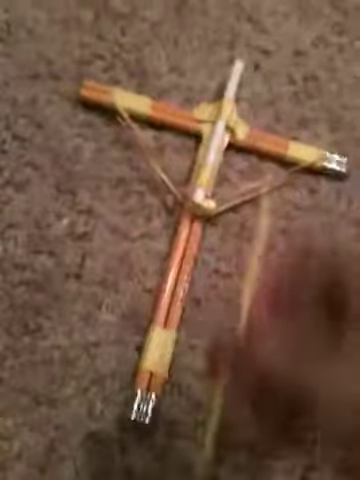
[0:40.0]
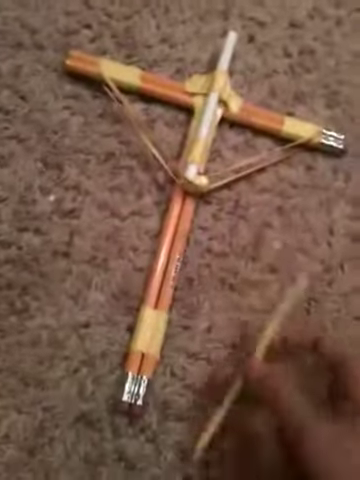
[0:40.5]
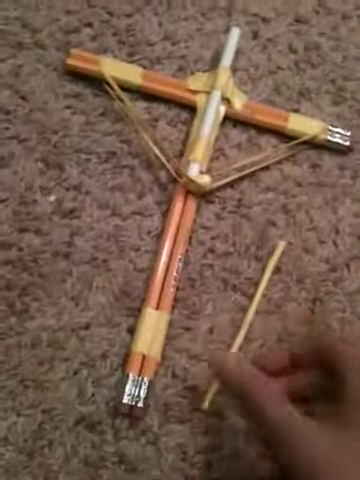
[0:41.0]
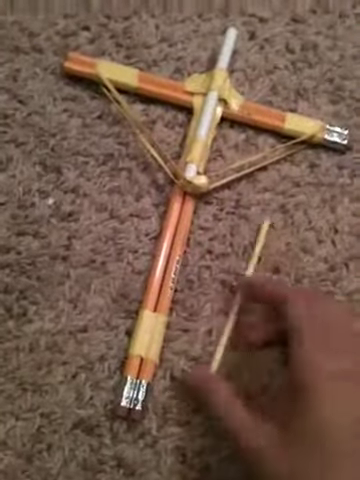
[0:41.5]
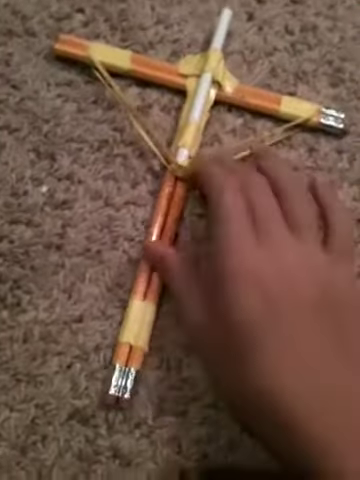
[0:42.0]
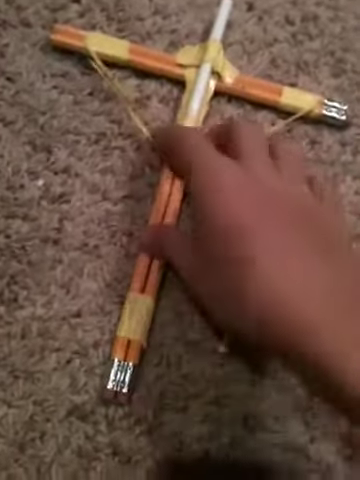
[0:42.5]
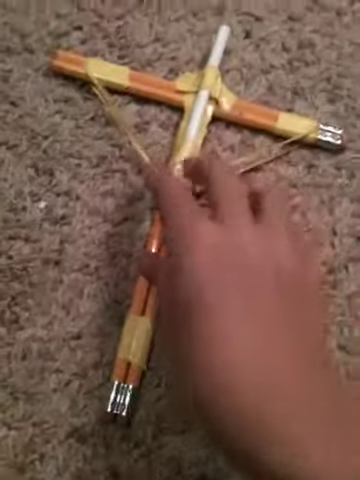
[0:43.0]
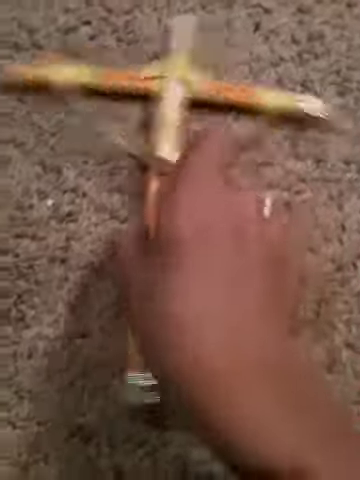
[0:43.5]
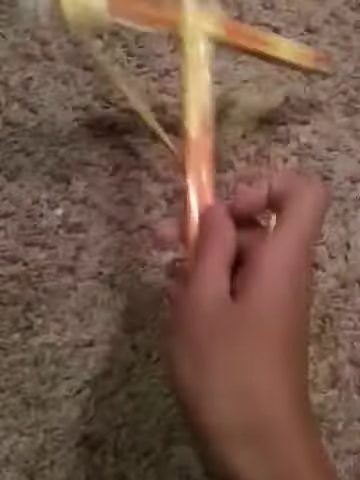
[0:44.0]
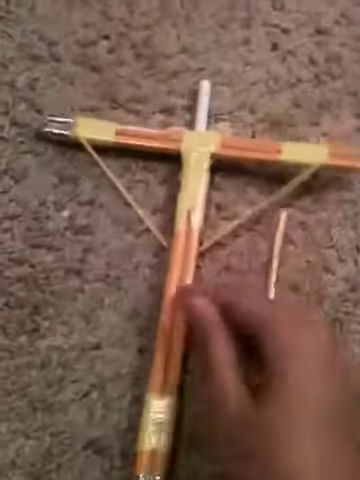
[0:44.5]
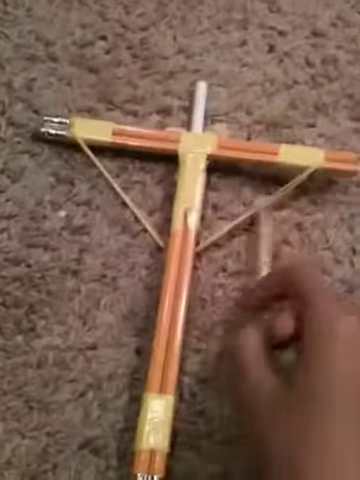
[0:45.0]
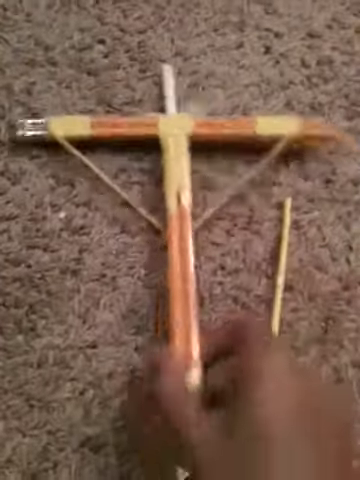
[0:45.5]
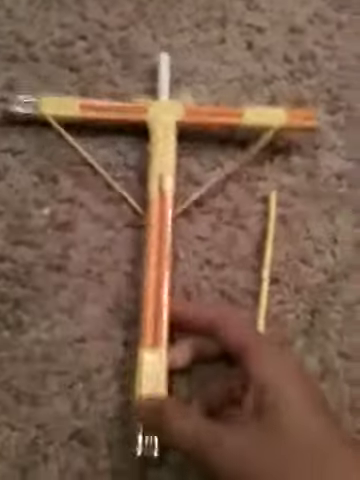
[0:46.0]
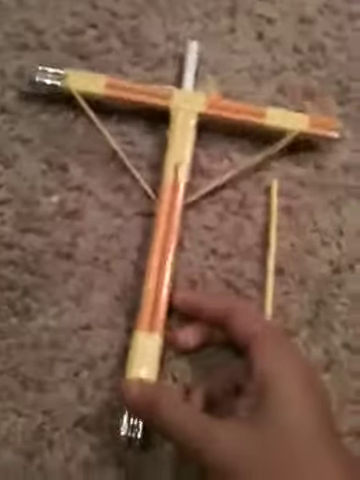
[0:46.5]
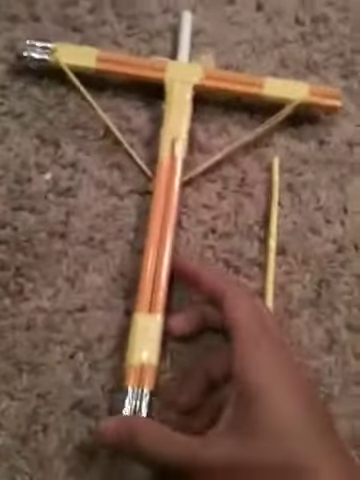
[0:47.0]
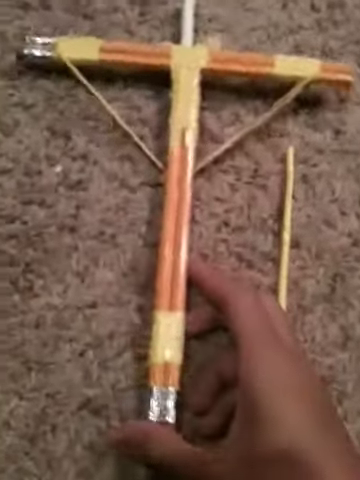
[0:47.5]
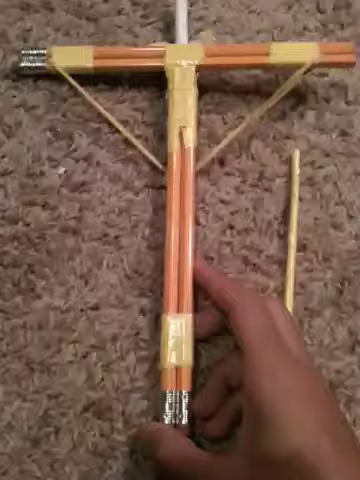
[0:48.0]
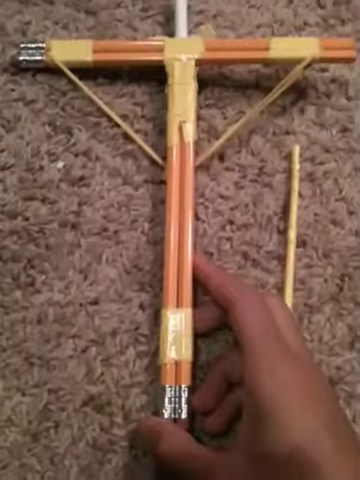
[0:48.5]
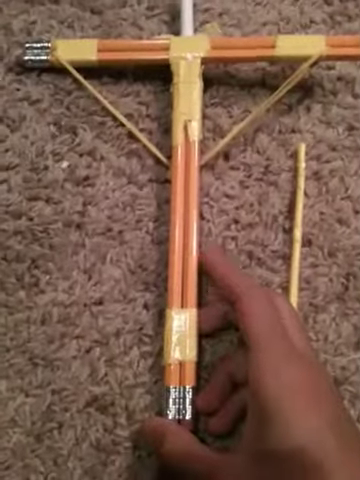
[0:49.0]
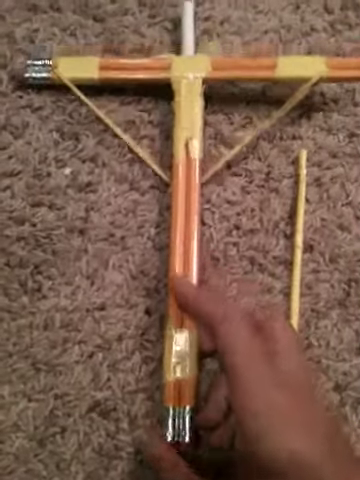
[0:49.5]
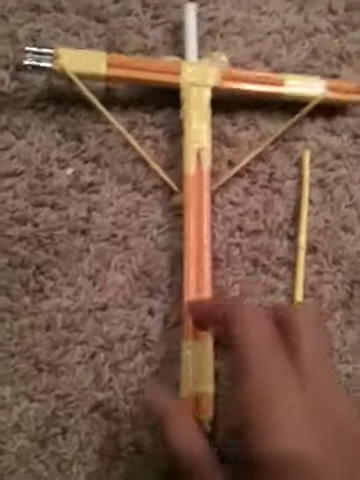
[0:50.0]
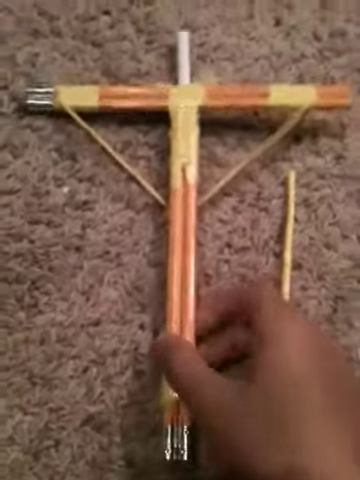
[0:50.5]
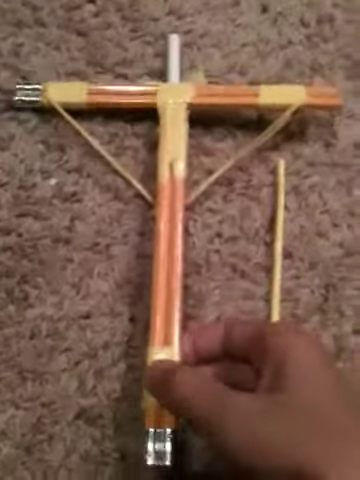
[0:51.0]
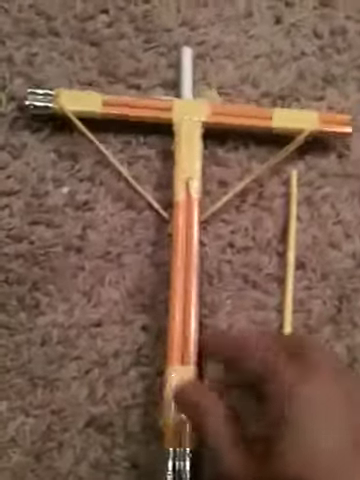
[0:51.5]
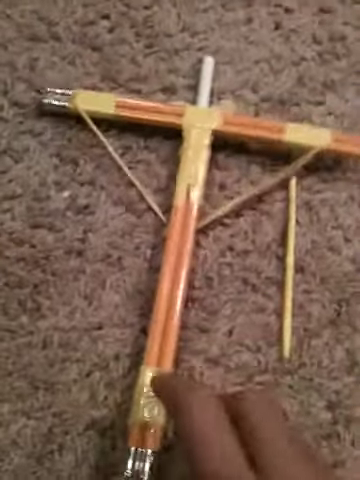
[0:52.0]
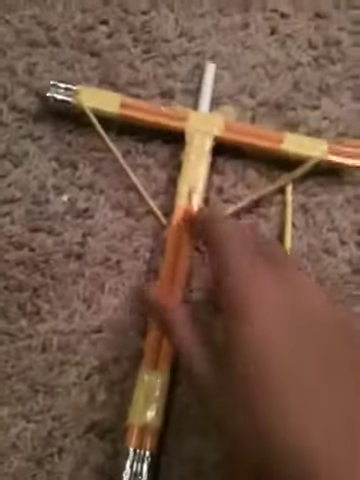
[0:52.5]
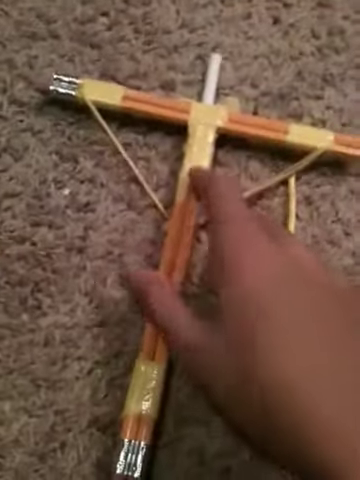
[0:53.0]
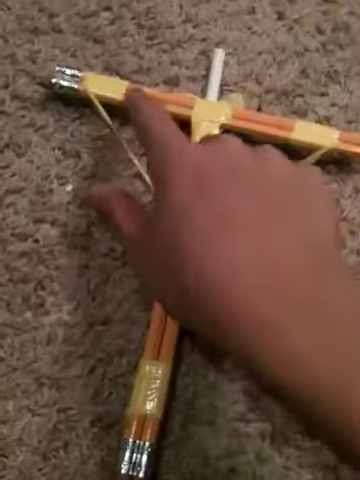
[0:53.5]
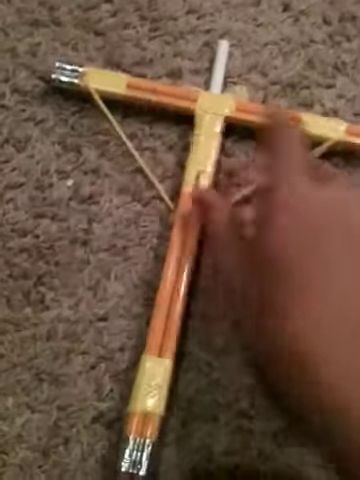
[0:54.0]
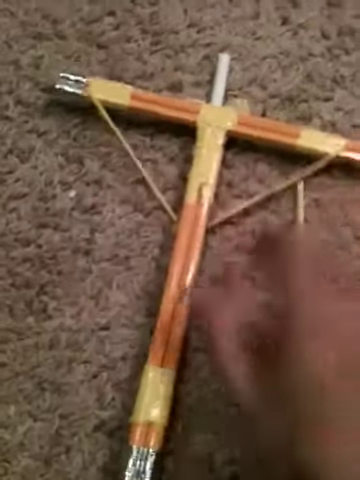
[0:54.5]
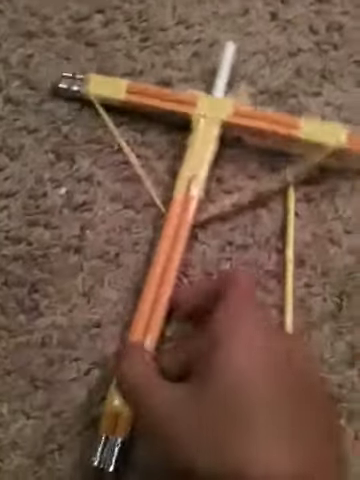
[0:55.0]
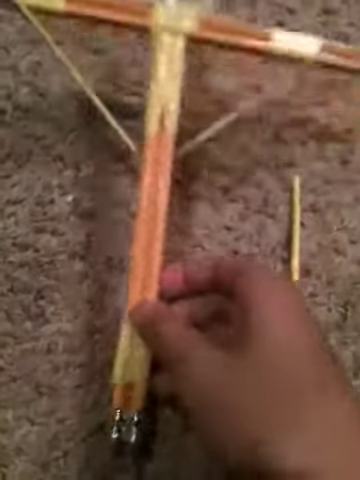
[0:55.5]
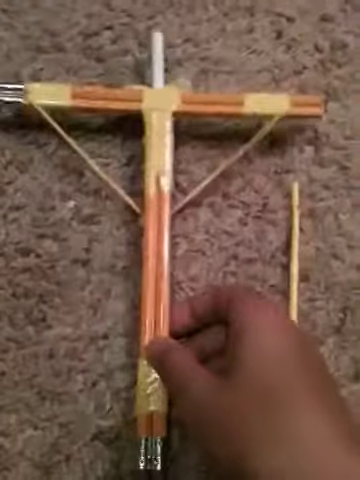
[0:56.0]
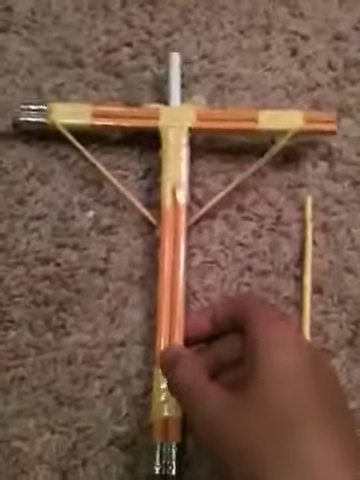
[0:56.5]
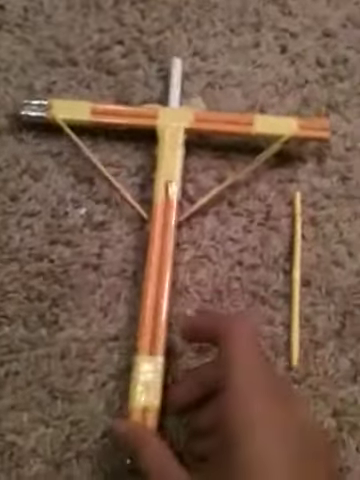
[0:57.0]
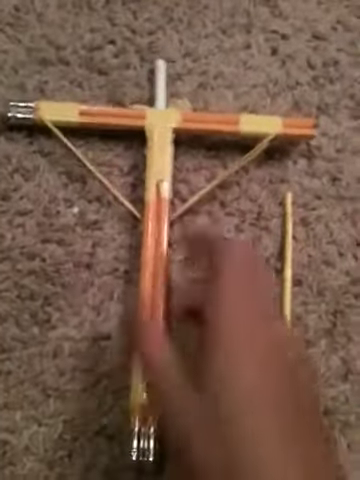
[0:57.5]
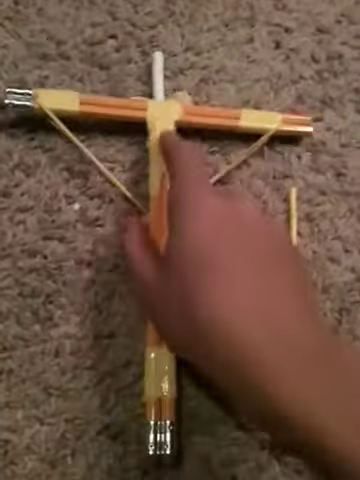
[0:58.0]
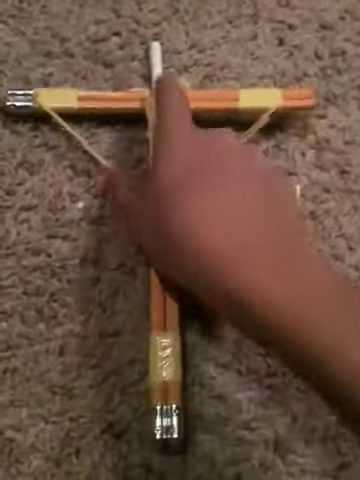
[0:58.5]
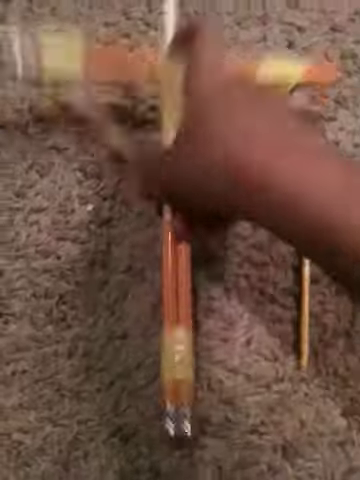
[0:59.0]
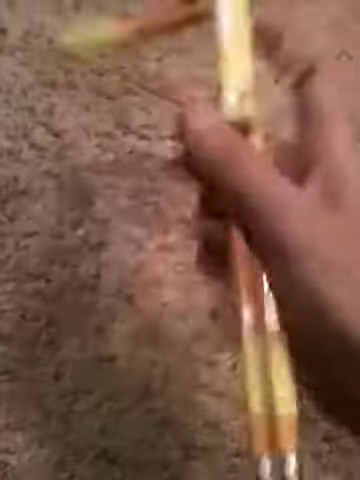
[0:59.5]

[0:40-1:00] The pencil crossbow contraption is made of unsharpened pencils with erasers on the end, with an elastic band holding it together and a white tube serving as a loading port. The user's right hand spins the crossbow over to its back side and holds the rear end with the thumb and forefinger, then points toward the yellow tape holding the device together. The hand flips the crossbow over to show its various components. The user appears to be light-skinned and Caucasian, and touches the crossbow bolt, a light brown wooden skewer. The user continues showing the components by pulling back the elastic and flipping the crossbow over, showing the front and back of the device.